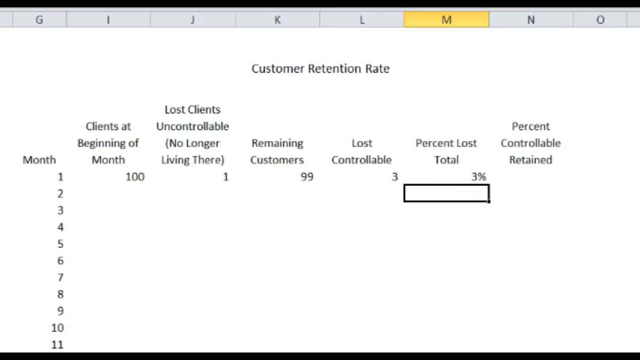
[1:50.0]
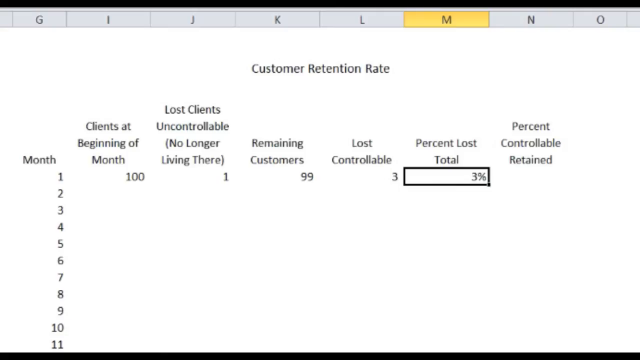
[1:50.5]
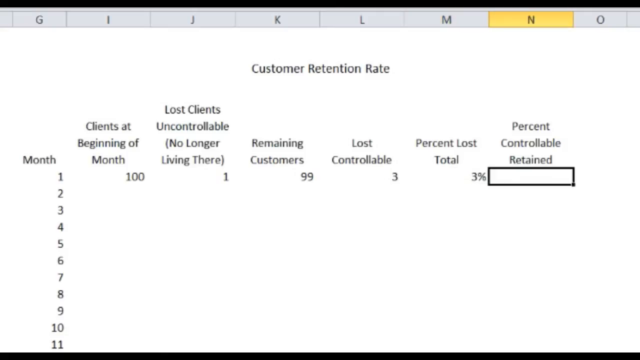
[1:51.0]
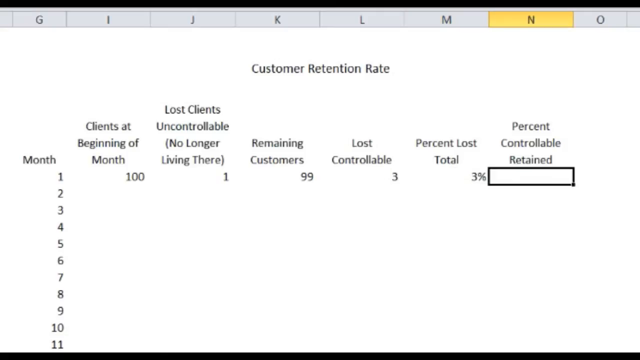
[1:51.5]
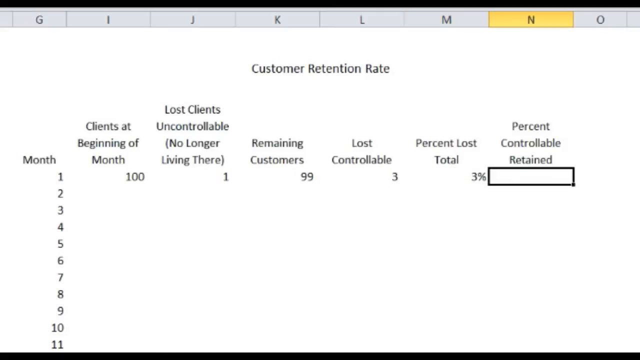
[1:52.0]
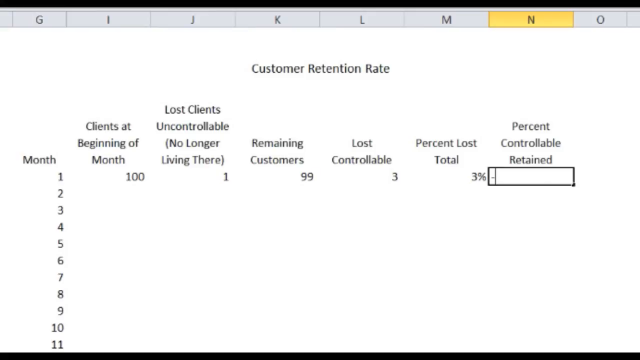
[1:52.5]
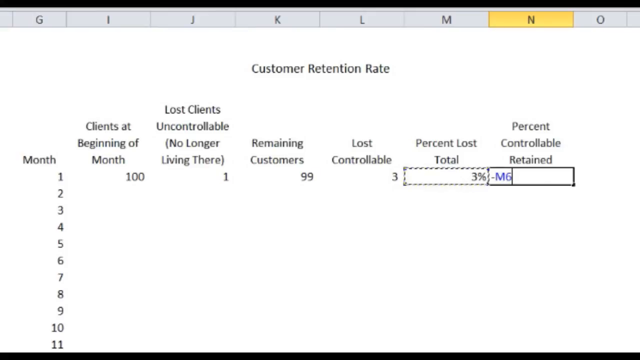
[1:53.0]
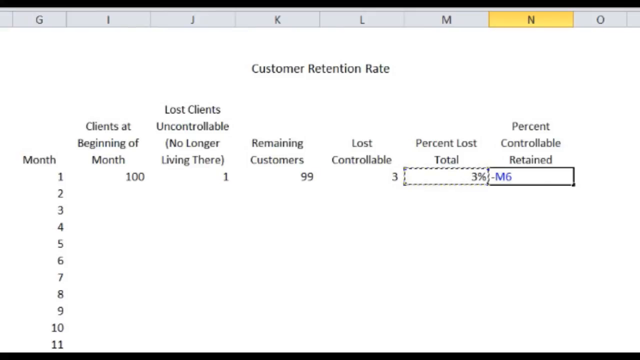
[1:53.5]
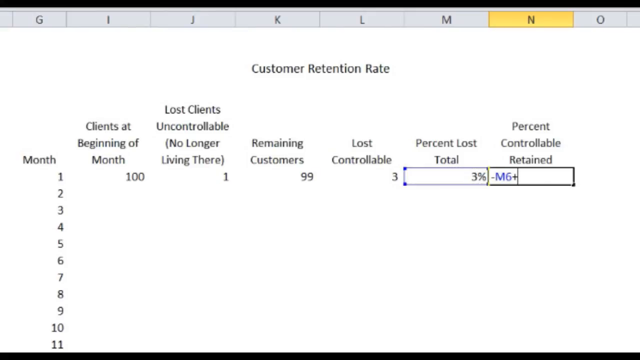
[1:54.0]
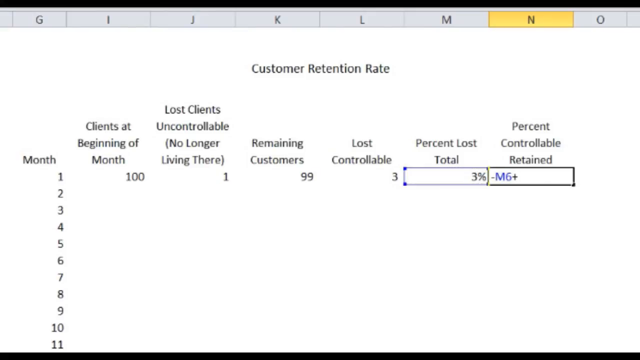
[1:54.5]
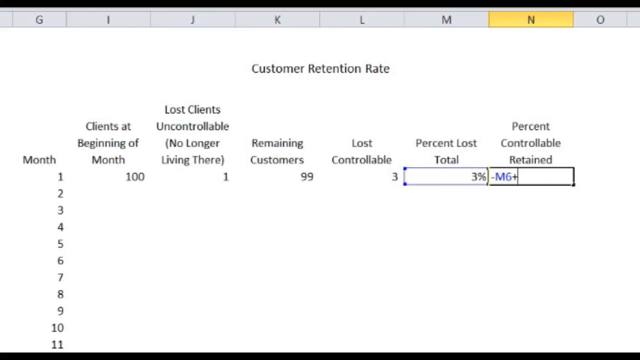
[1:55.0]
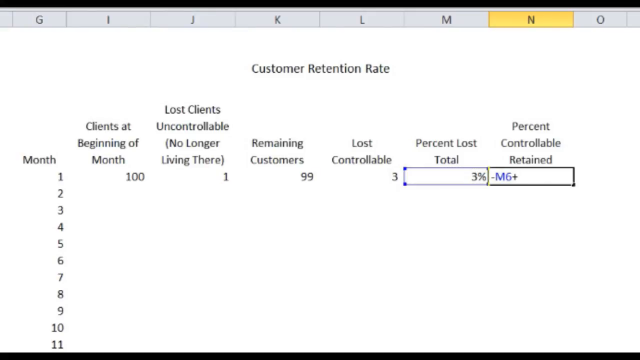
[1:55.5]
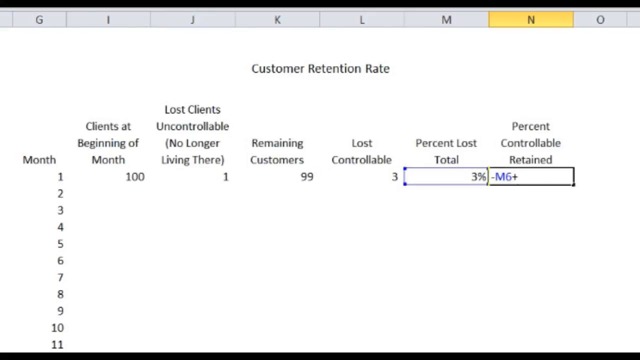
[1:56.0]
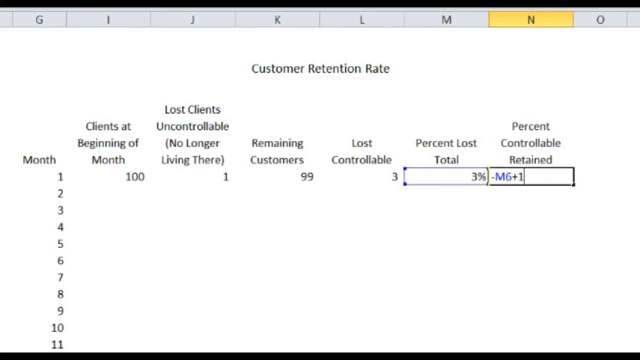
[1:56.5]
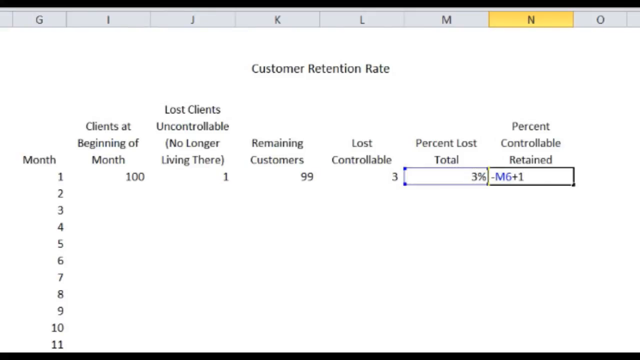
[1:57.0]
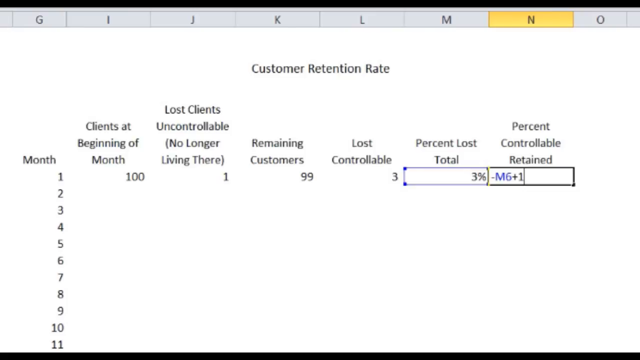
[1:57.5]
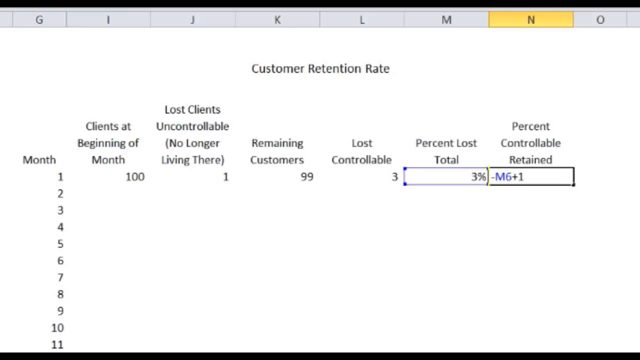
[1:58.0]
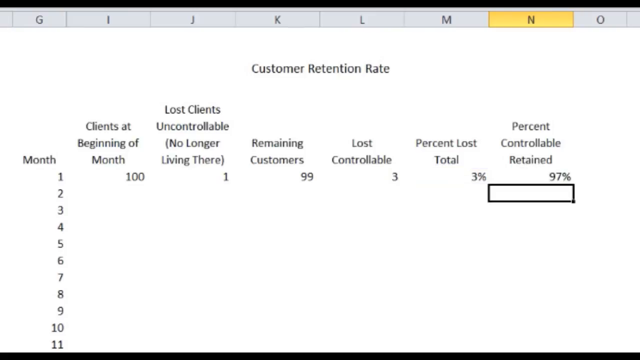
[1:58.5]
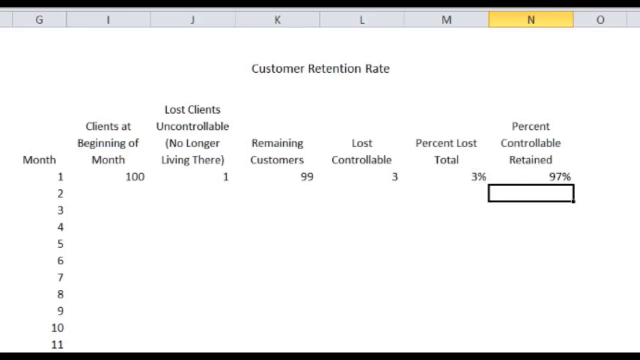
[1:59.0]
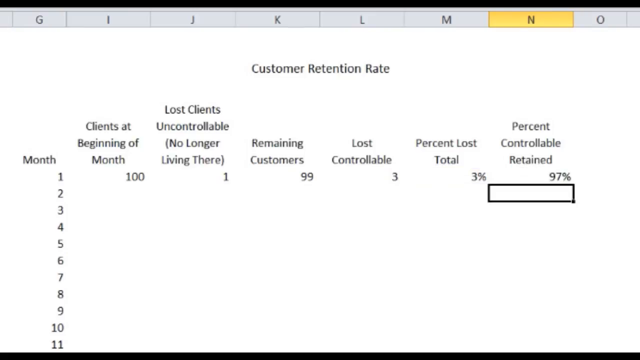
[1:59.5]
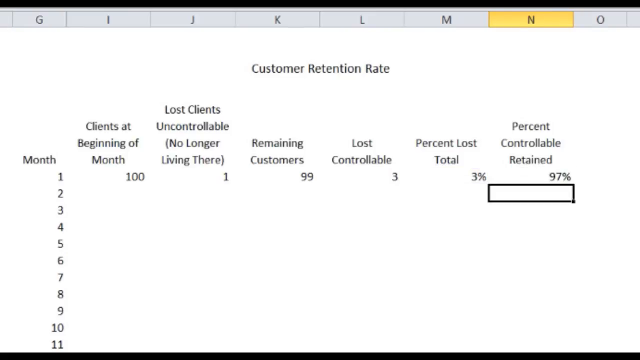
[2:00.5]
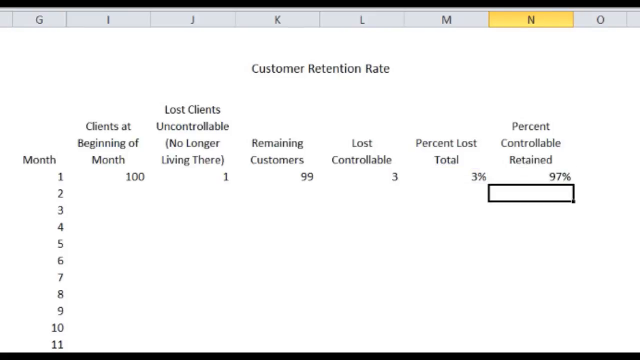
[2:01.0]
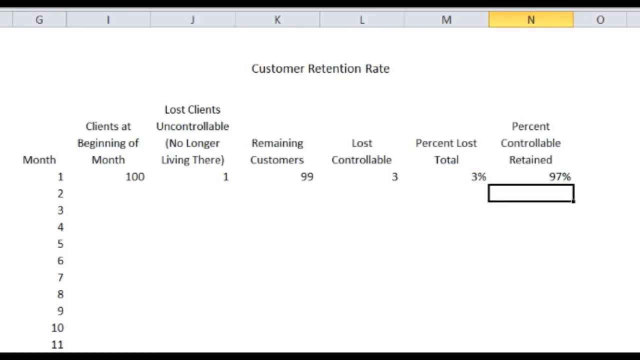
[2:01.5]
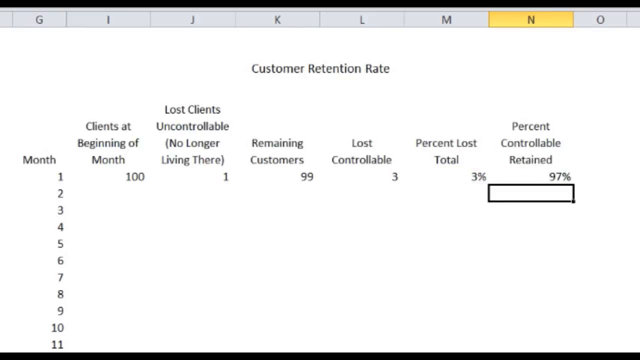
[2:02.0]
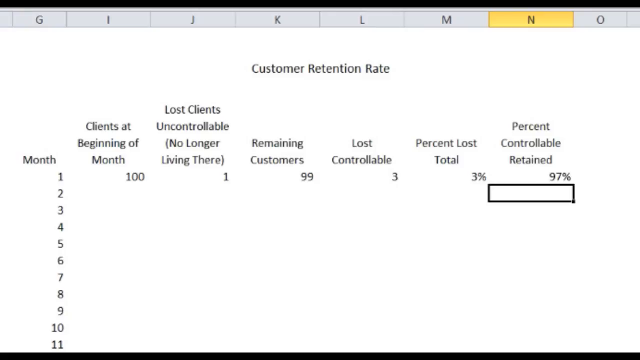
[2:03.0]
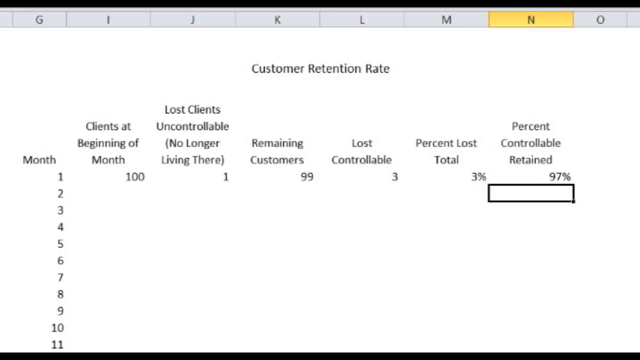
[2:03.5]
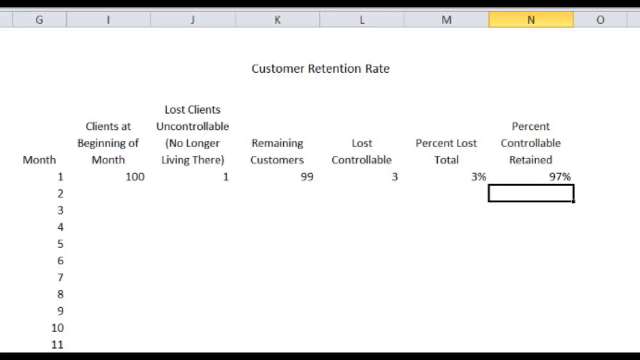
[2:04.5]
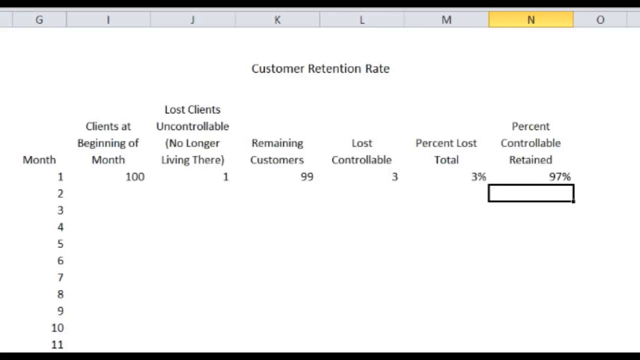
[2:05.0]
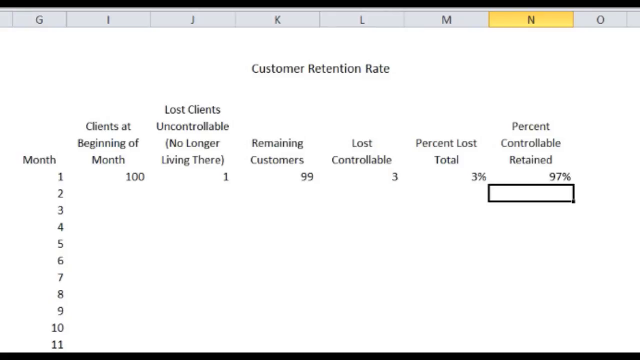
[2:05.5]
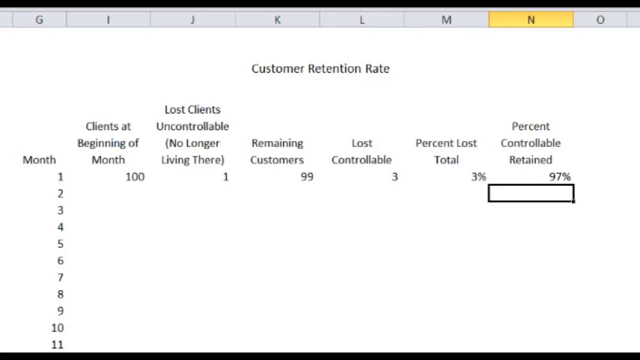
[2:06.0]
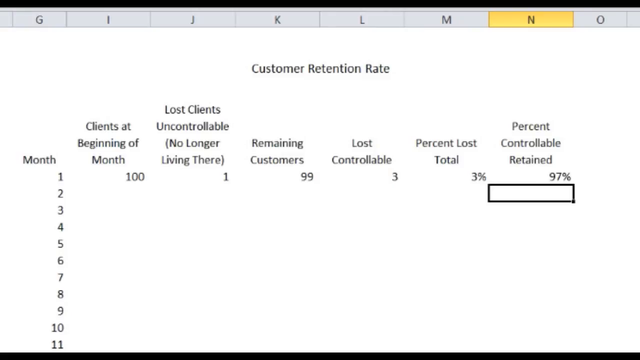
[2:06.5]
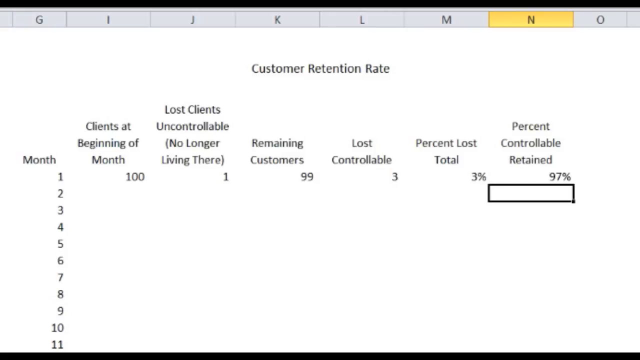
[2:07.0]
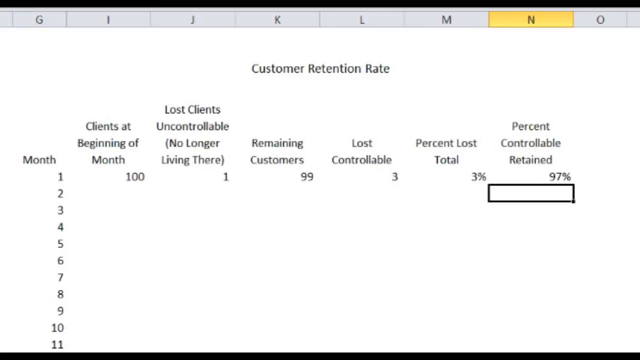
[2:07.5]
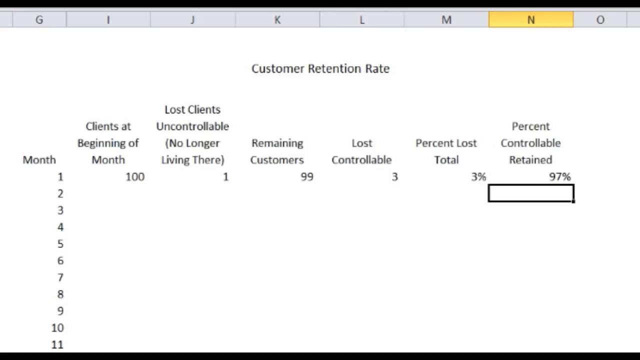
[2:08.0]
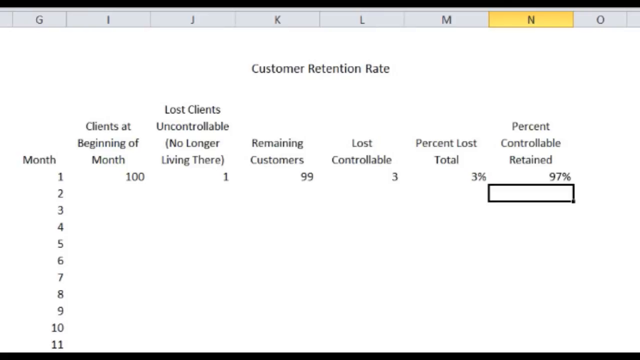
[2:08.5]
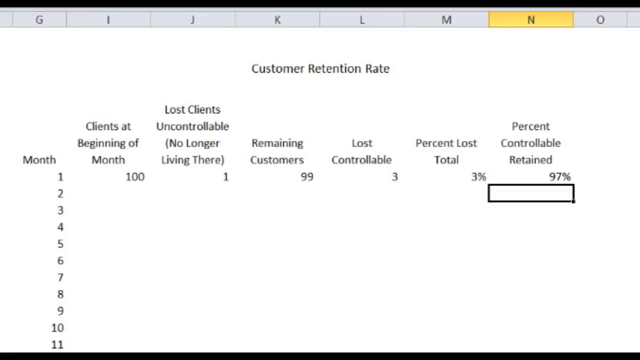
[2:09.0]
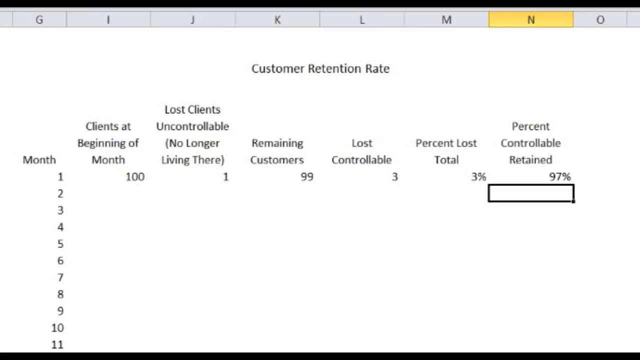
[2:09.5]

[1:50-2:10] An Excel spreadsheet has "Customer retention rate" written on the top, with titled columns beneath. The first column says "Month" and lists the month numbers in ascending order. The second column, "Clients at beginning of the month", is prefilled with 100. Next is "Lost clients uncontrollable (no longer living there)", with the number one prefilled for month one. The "Remaining customers" column is prefilled with 99, a formula of the clients at the beginning of the month minus the lost clients uncontrollable. The "Lost controllable" column is prefilled with three, and the "Percent lost total" column with 3%, a formula dividing the lost controllable number by the remaining customers number. Finally, the "Percent controllable retained" column is filled in by taking the negative of the percent lost total of 3% and adding one to it, which gives 97%.